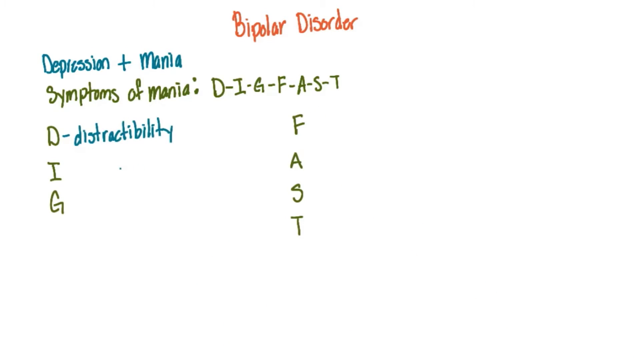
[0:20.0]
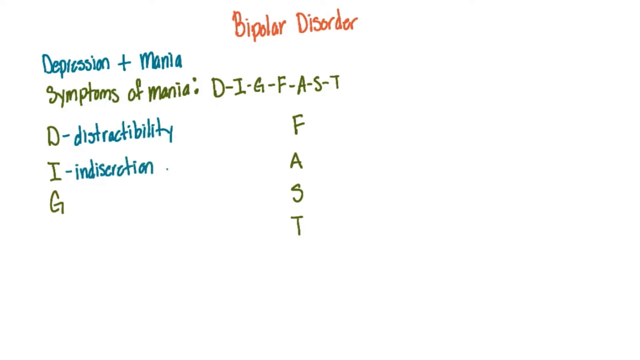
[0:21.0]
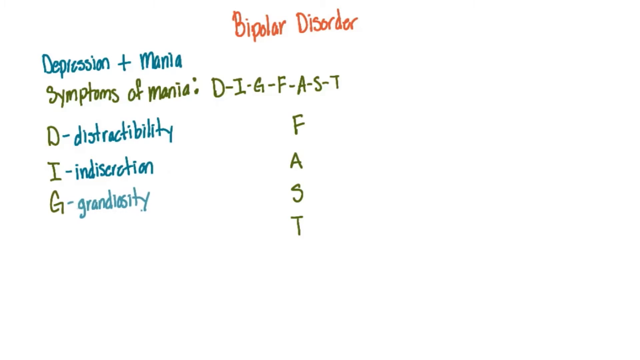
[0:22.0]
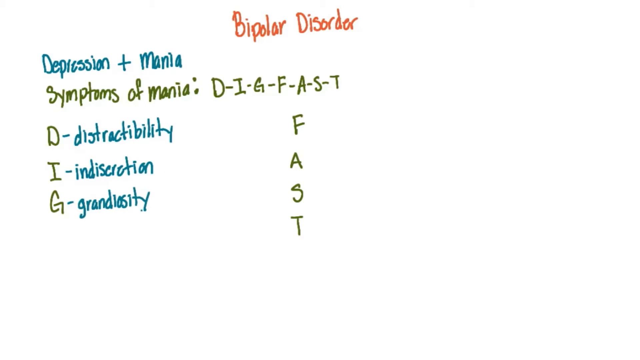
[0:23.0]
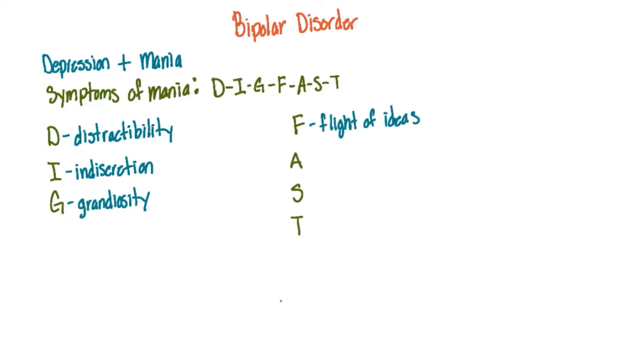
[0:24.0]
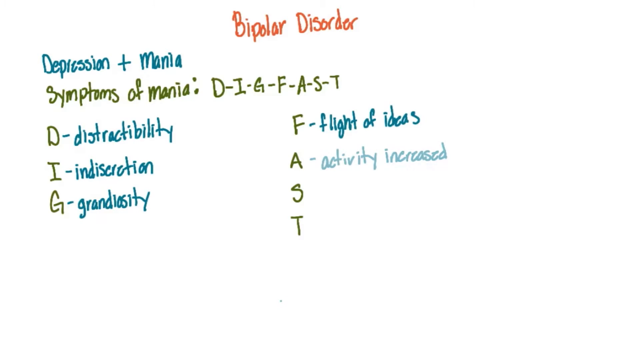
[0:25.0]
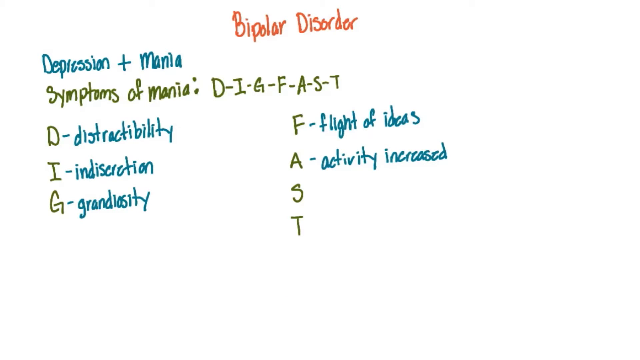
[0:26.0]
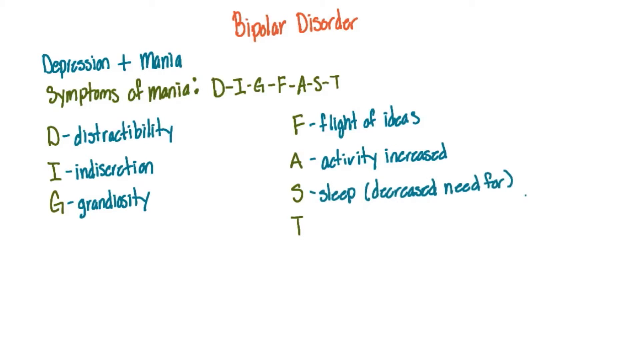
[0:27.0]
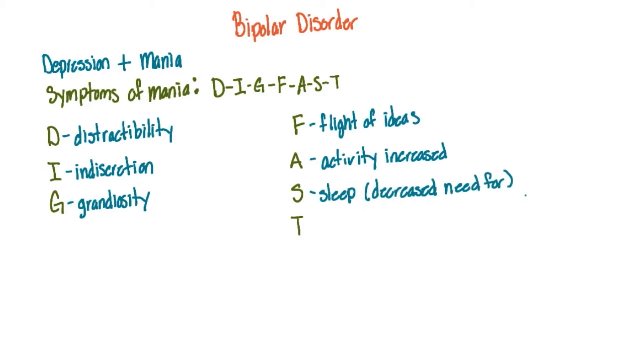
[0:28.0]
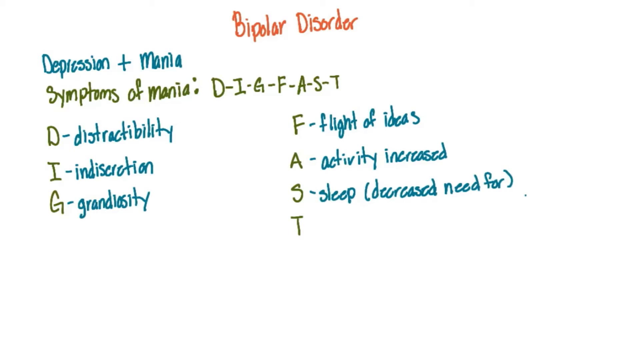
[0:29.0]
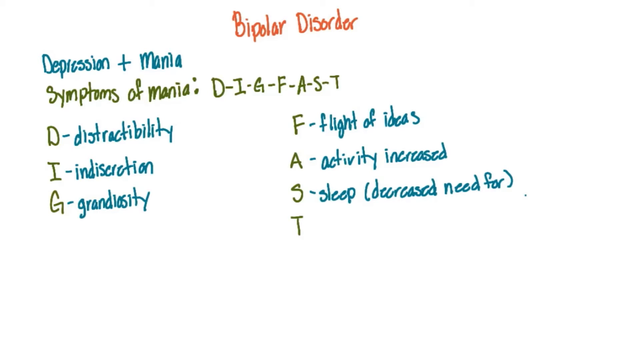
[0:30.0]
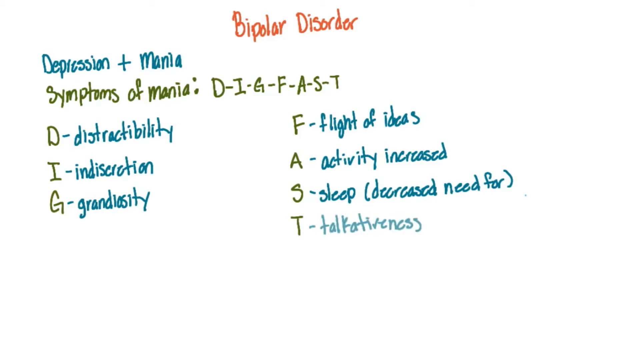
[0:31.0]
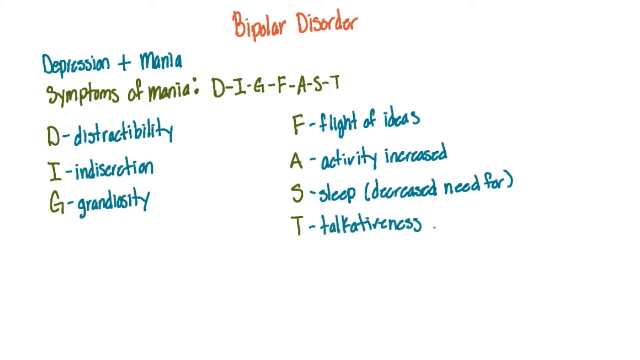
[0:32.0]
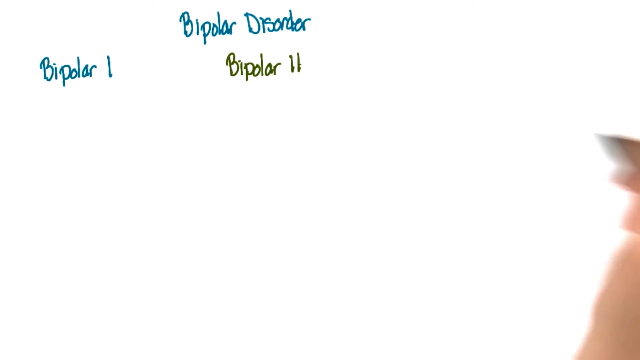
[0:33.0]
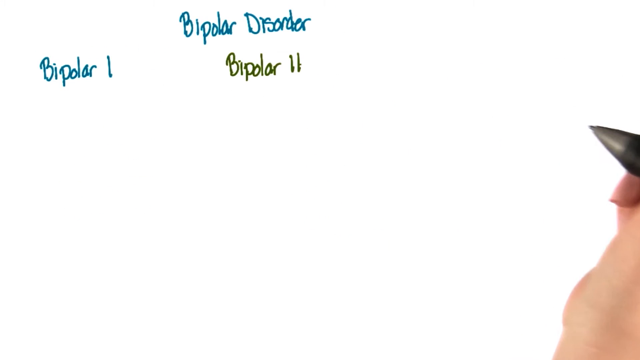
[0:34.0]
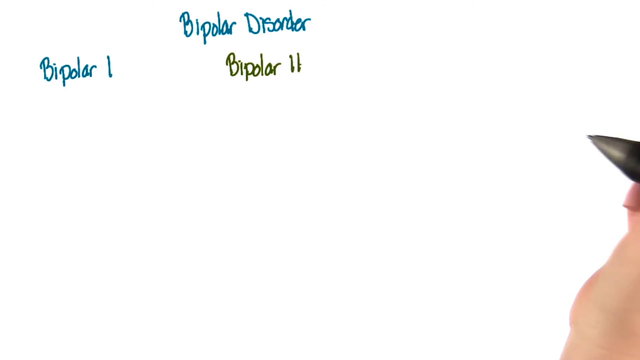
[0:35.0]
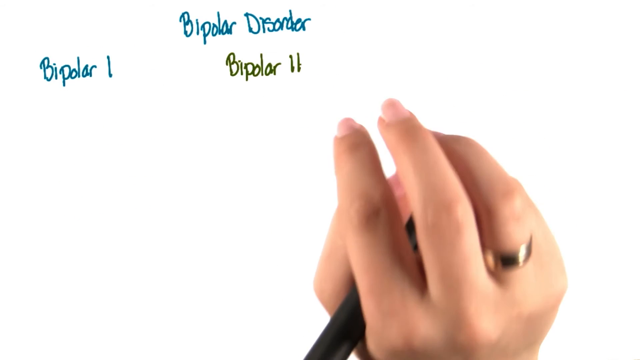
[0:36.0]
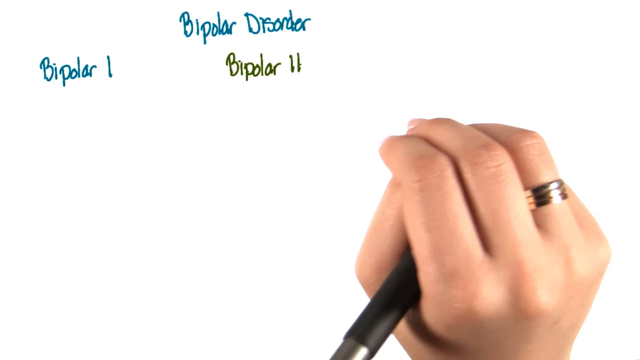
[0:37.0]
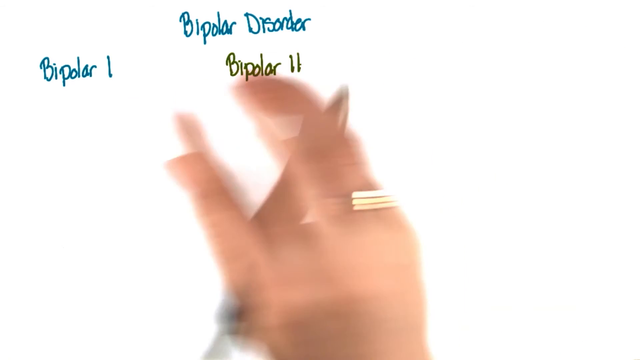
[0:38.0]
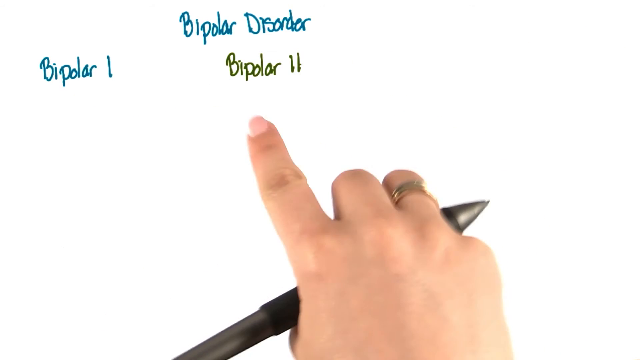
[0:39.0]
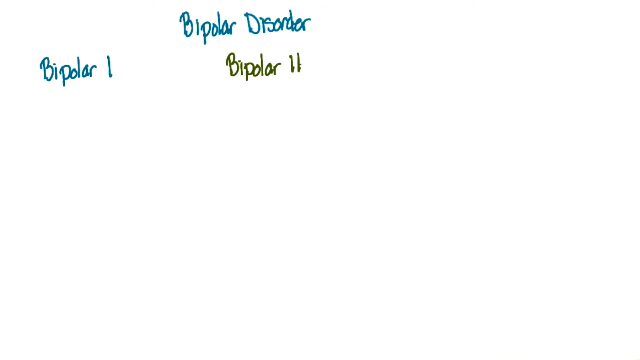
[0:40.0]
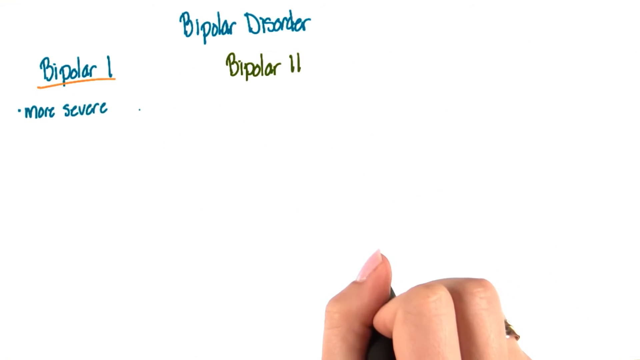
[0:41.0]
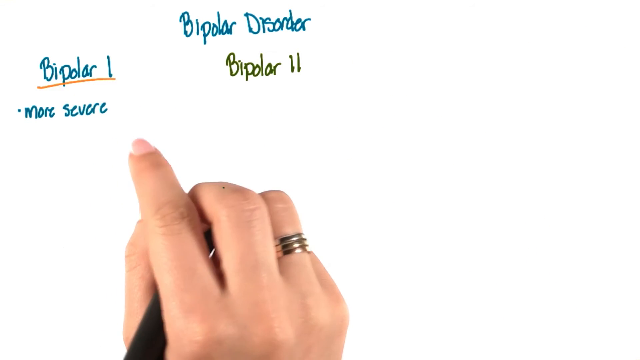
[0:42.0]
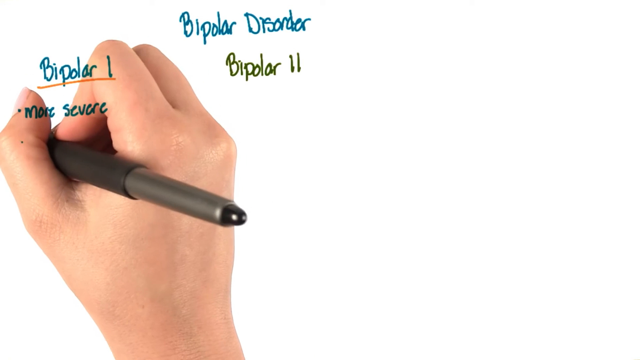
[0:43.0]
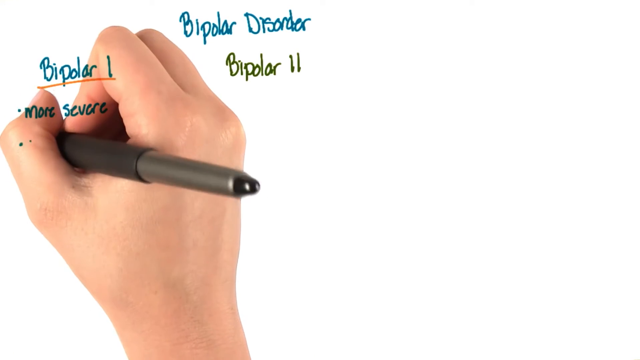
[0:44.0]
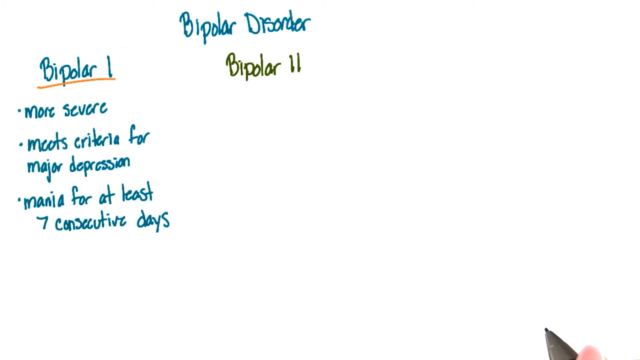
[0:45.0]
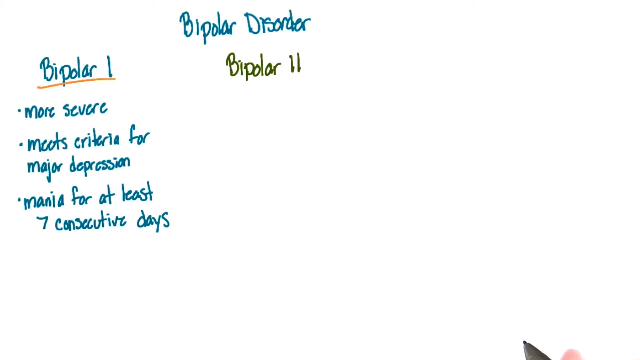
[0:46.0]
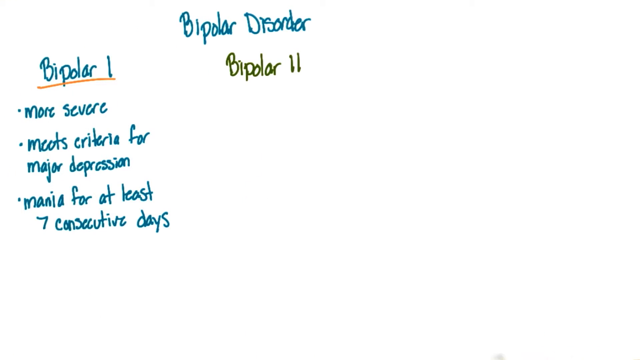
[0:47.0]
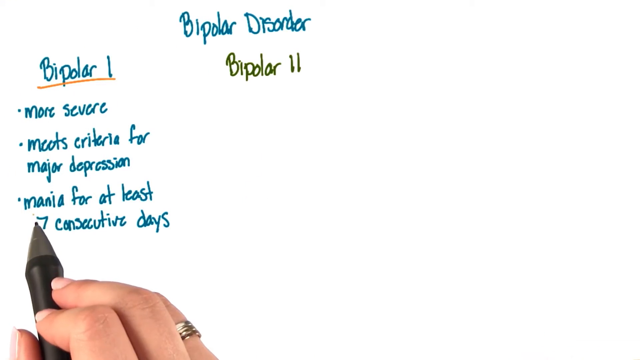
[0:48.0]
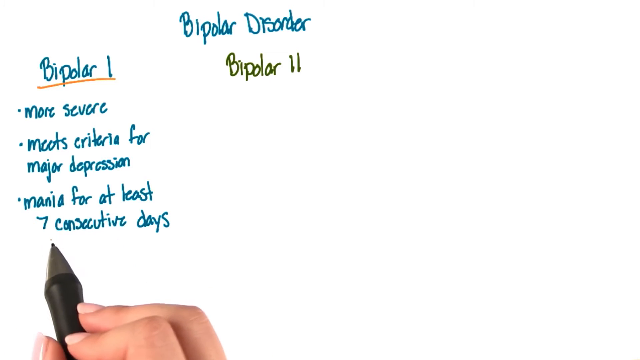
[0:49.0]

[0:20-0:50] A white background holds multiple lines of text. "Bipolar disorder" is in the top center, with lines underneath reading "depression plus mania" and "symptoms of mania D-I-G-F-A-S-T". Beneath these, two columns spell out two words going downwards, "big" in one column and "fast" in the next, shown to be an acronym. The first word is "distractibility" for D. Then "indiscretion" appears next to I, "grandiosity" next to G, "flight of ideas" next to F, "activity increased" next to A, "sleep, decreased need for" next to S, and "talkativeness" next to T. These two columns then disappear and new text reading "bipolar 2" appears underneath "bipolar disorder". A human hand holding an ink pen with the right thumb and index finger comes up from the bottom right and points at the screen, motioning downwards toward "bipolar 2". The index finger then points at "bipolar 1", the first set of text, and at "bipolar 2", the second set.